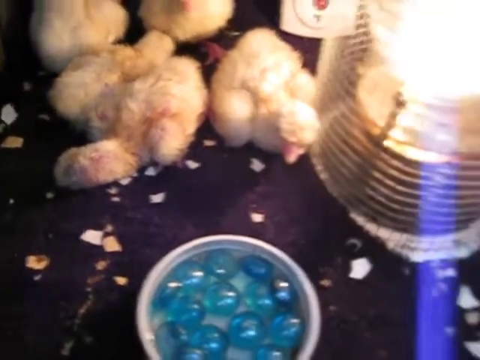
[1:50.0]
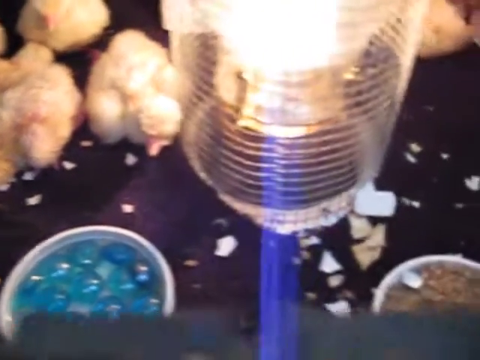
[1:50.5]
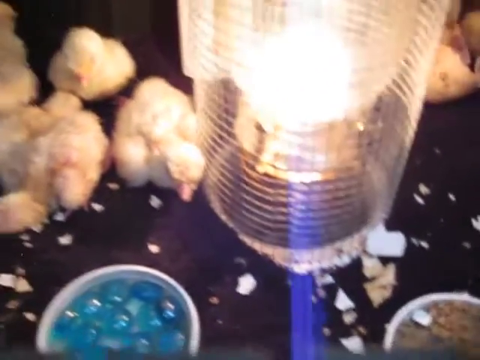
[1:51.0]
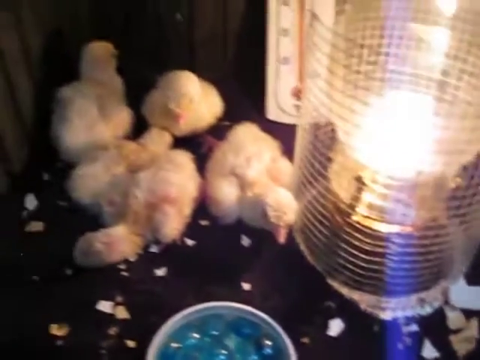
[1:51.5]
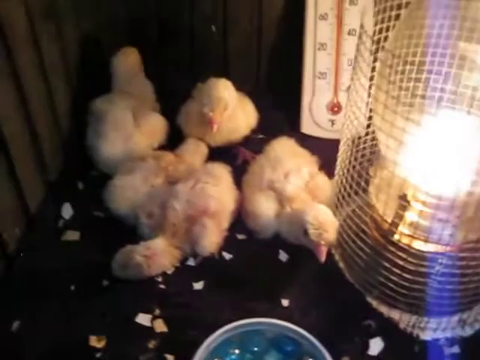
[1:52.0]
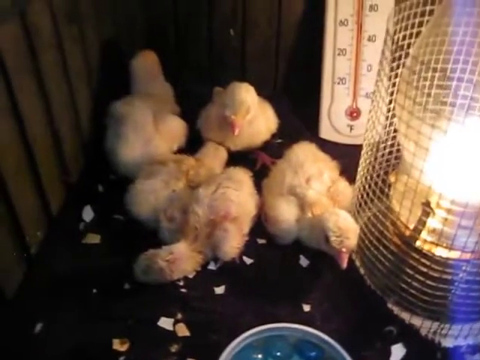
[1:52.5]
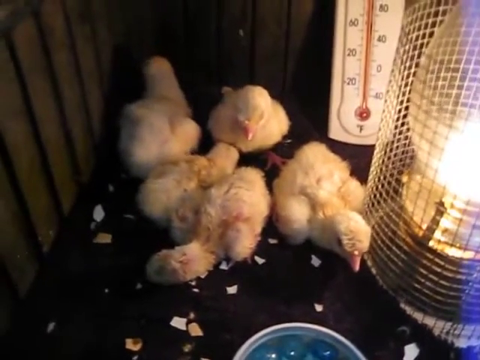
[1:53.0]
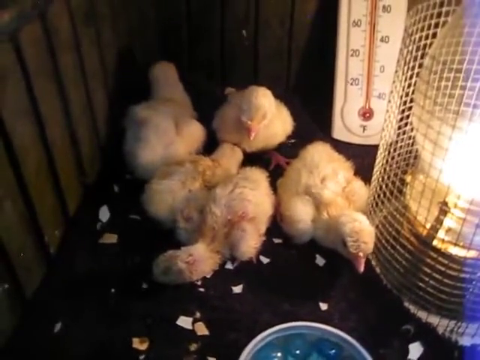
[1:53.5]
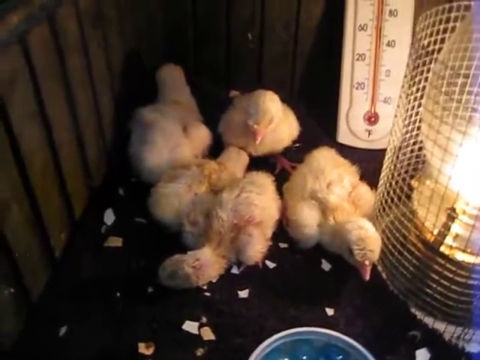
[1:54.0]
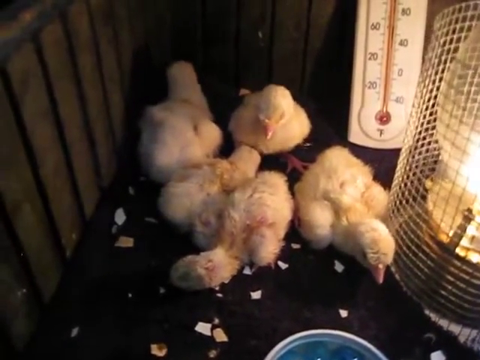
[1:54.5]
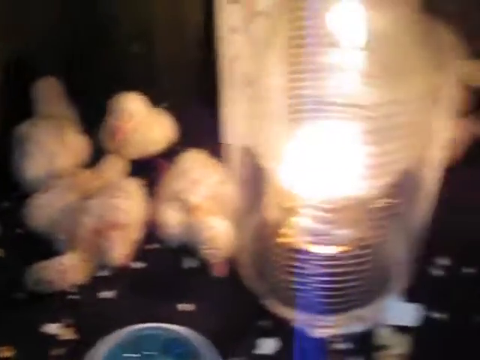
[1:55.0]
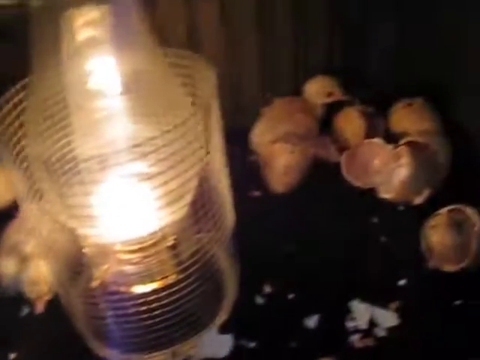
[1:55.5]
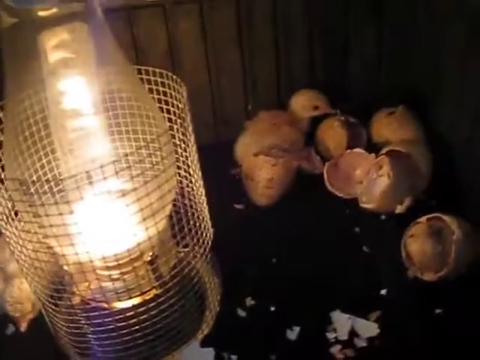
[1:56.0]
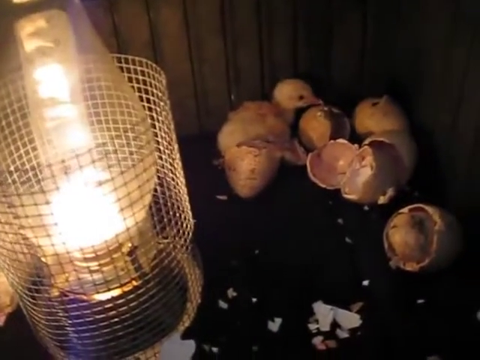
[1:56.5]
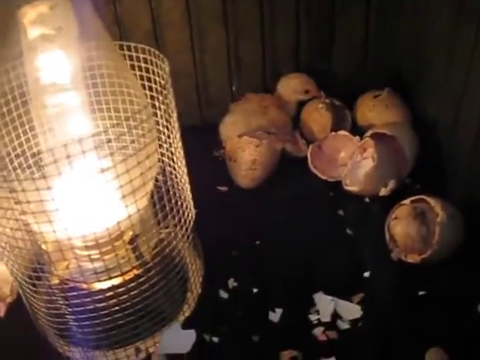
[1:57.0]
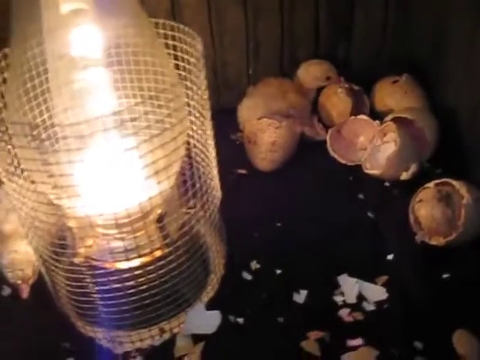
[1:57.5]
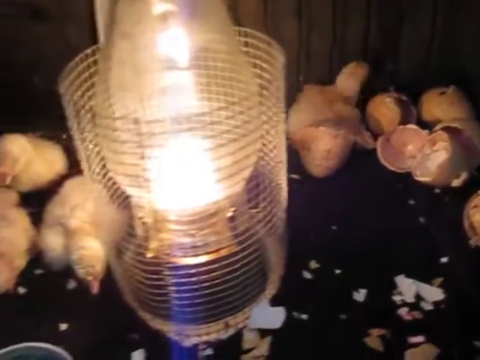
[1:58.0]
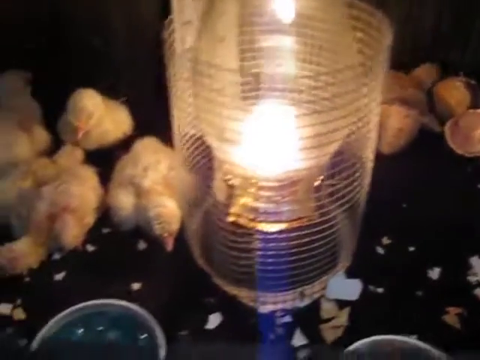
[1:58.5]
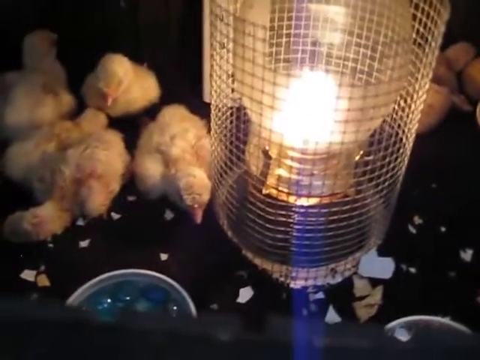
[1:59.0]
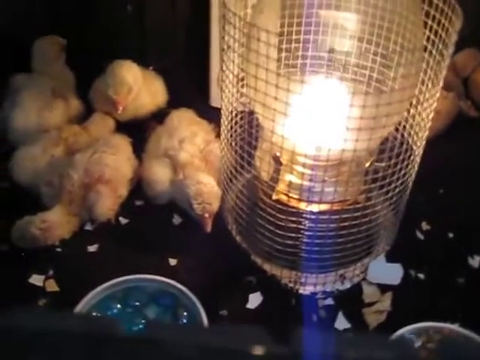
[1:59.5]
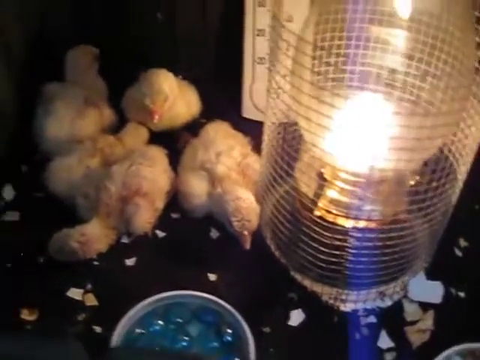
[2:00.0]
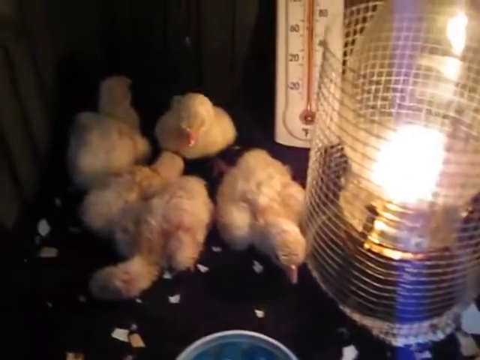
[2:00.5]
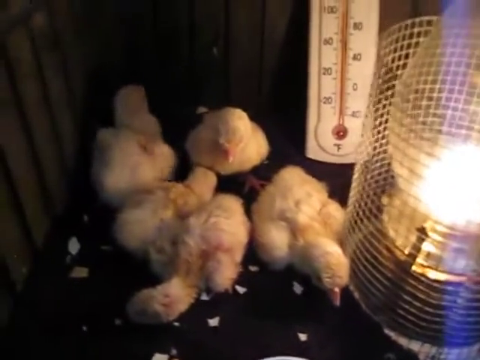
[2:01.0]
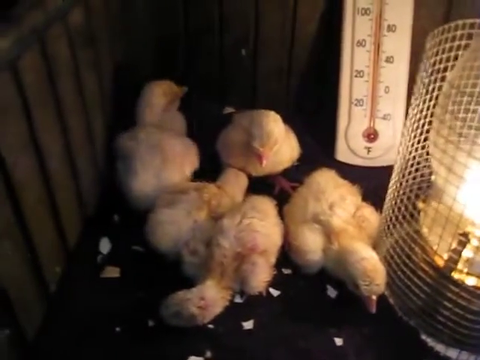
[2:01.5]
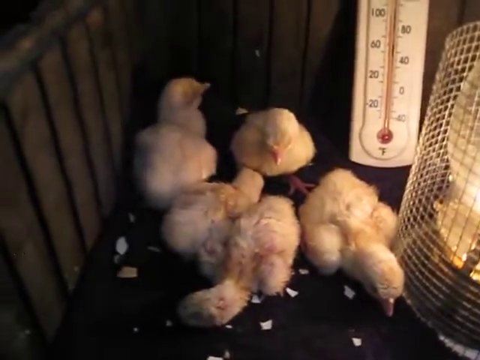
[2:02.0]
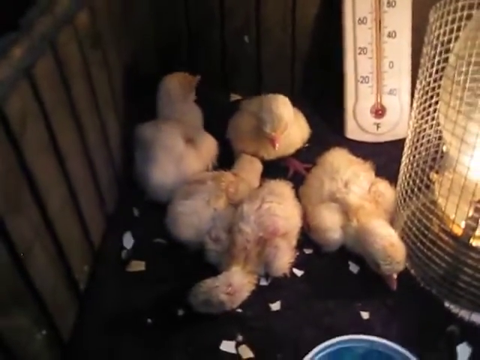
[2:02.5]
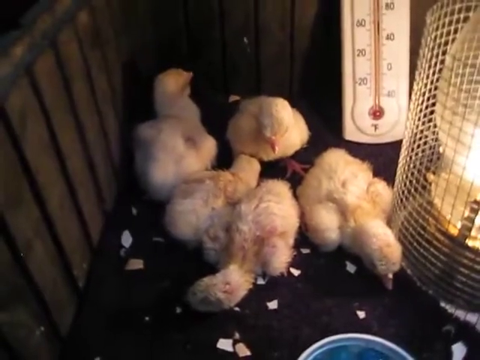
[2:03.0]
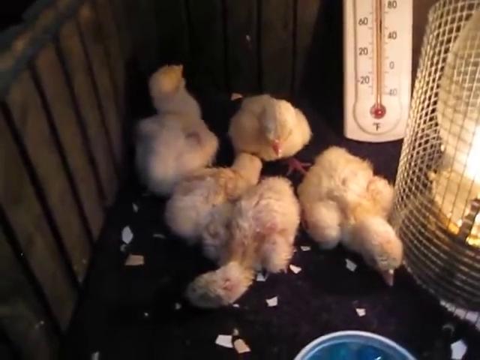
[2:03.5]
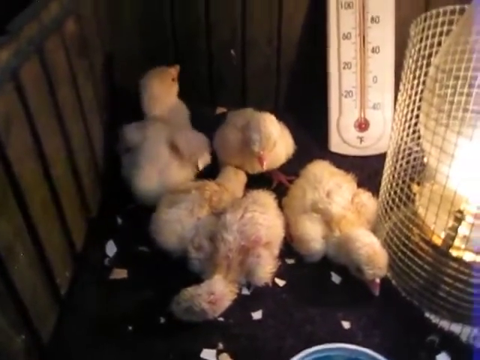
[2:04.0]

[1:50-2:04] A clearer view shows the inside of the tub: a white container holding blue particles, and next to it another plate that seems to carry food for the chicks, in what seem to be pots. One of the eggs is still next to its eggshells. A group of the newly hatched chicks is grouped together on the left-hand side, seemingly trying to keep each other warm.